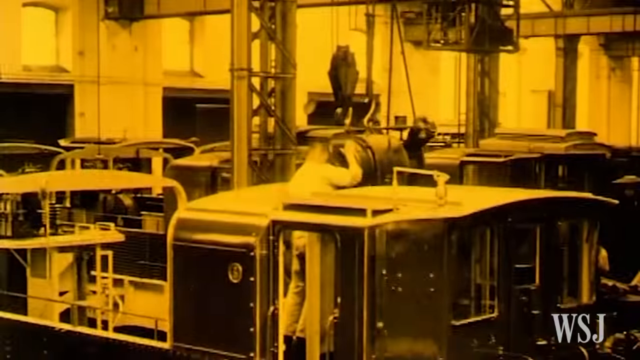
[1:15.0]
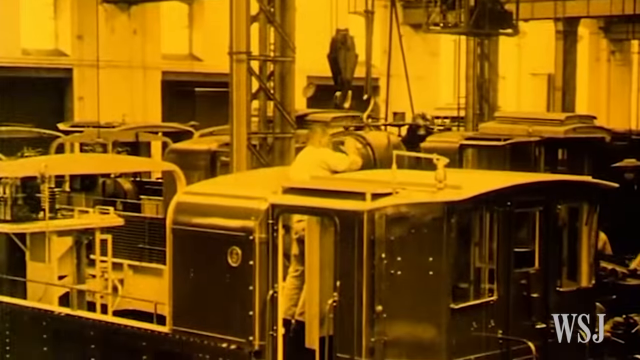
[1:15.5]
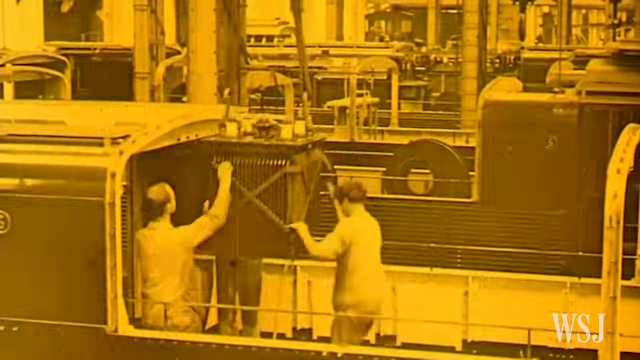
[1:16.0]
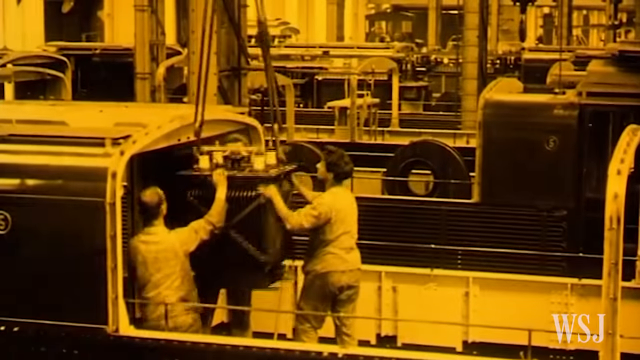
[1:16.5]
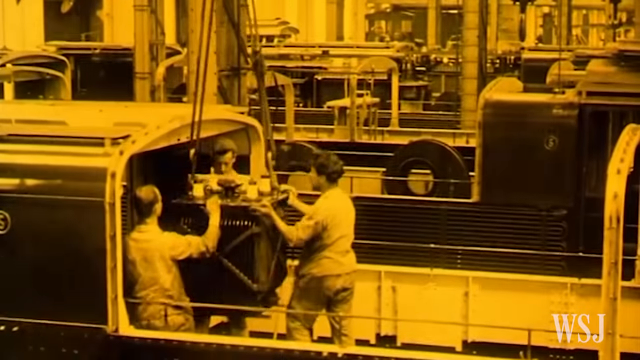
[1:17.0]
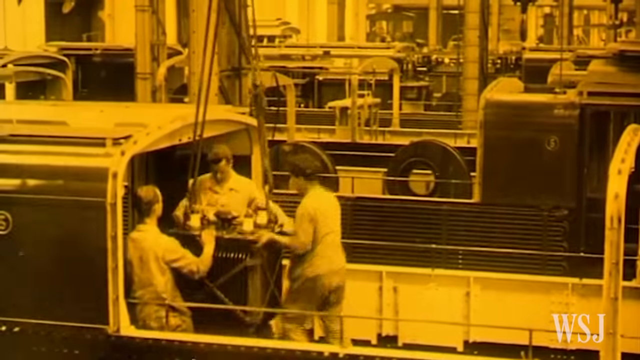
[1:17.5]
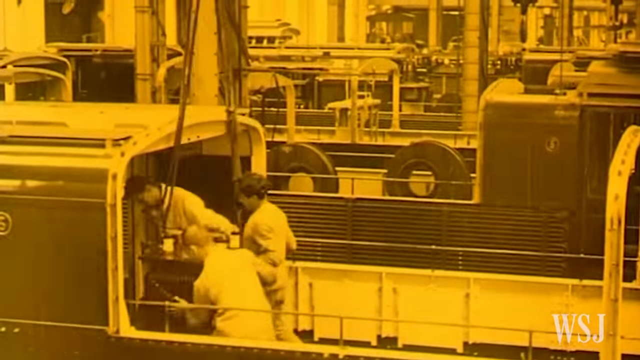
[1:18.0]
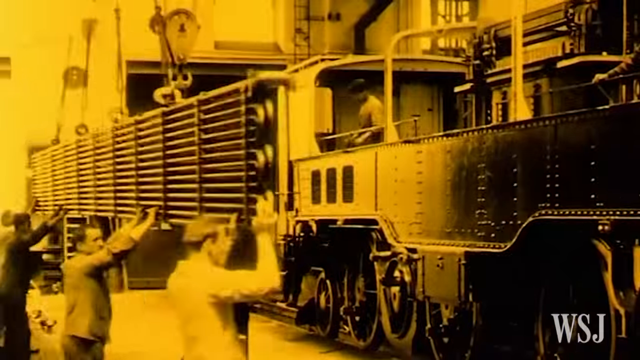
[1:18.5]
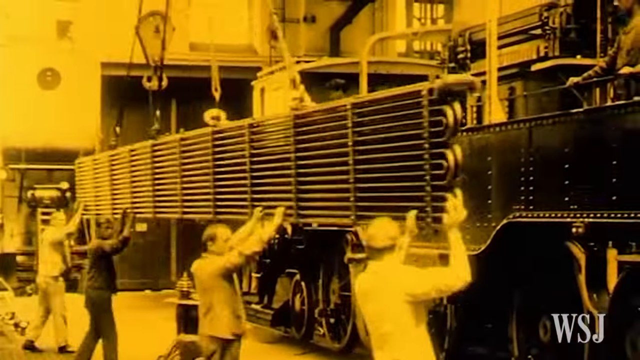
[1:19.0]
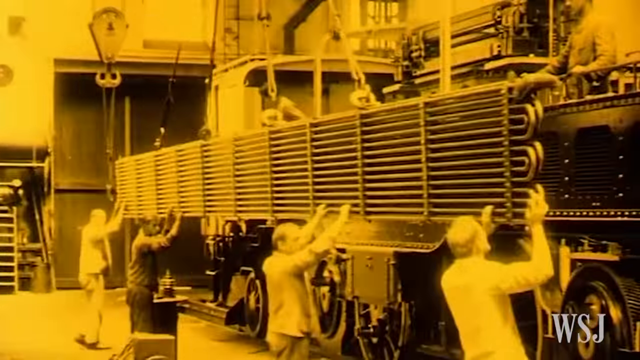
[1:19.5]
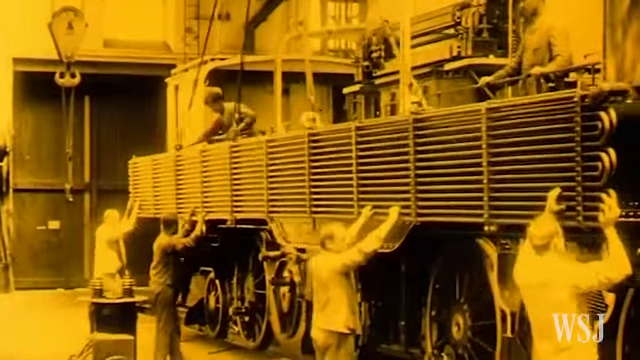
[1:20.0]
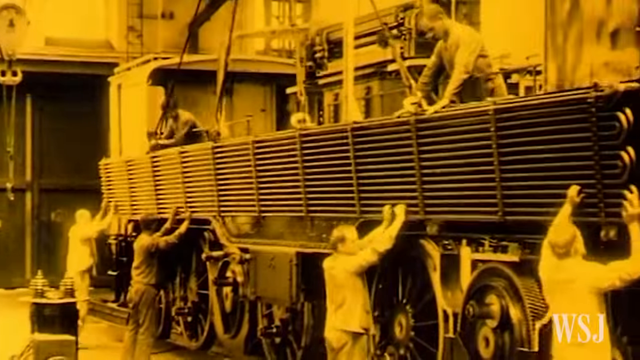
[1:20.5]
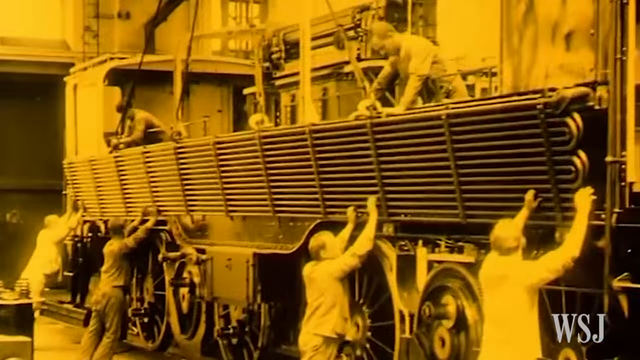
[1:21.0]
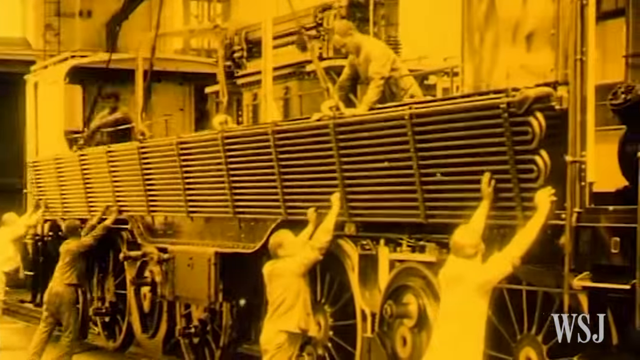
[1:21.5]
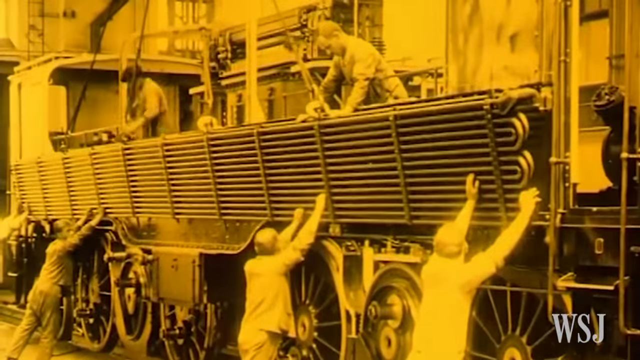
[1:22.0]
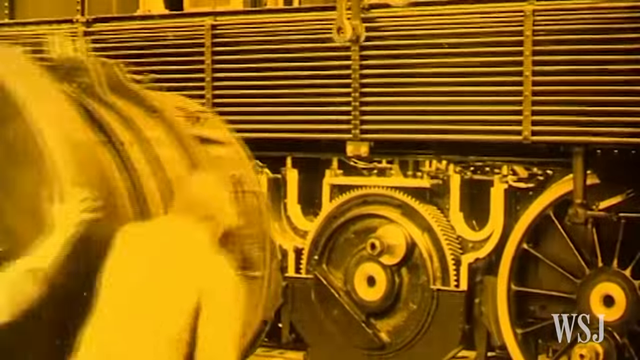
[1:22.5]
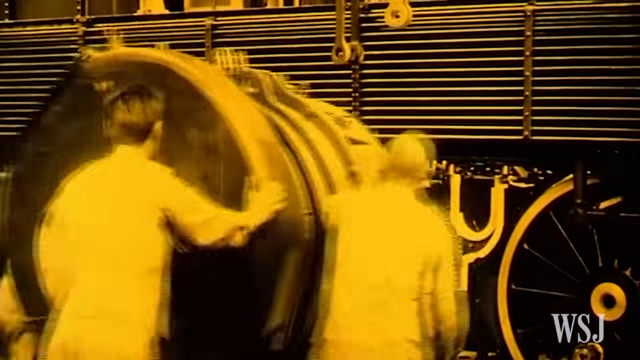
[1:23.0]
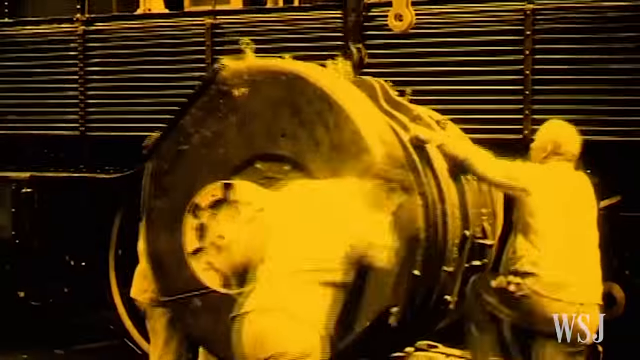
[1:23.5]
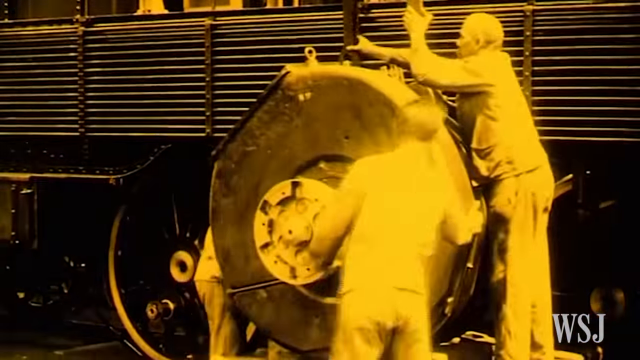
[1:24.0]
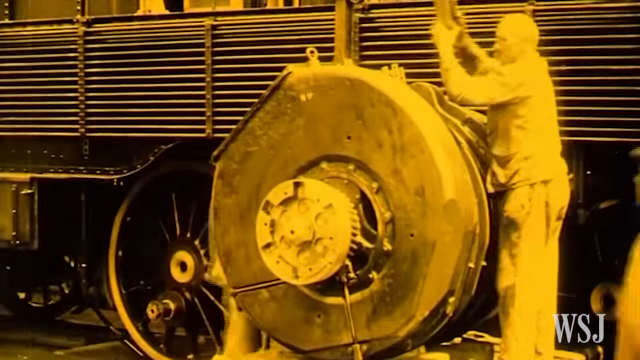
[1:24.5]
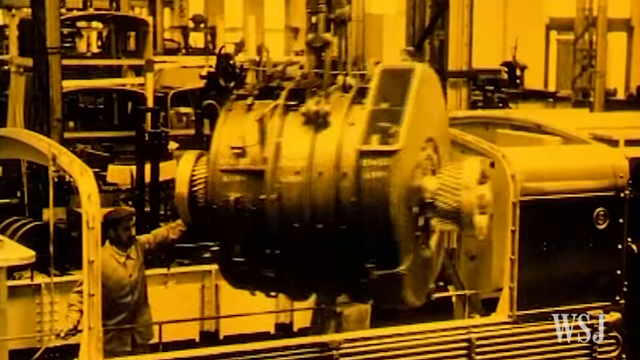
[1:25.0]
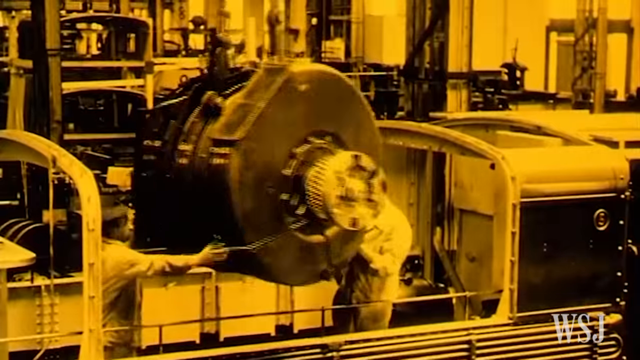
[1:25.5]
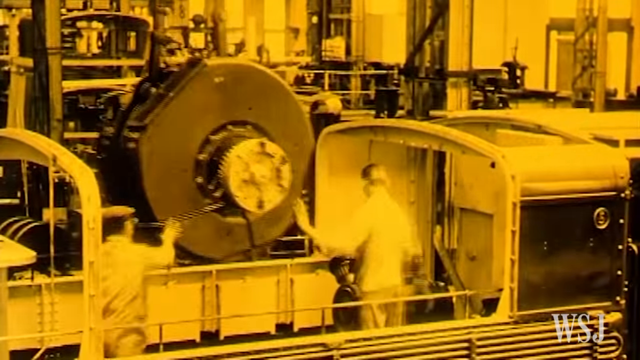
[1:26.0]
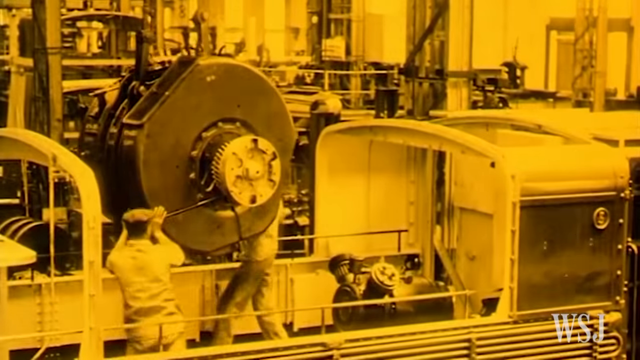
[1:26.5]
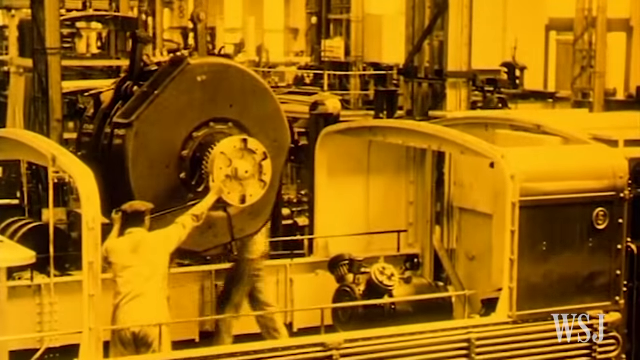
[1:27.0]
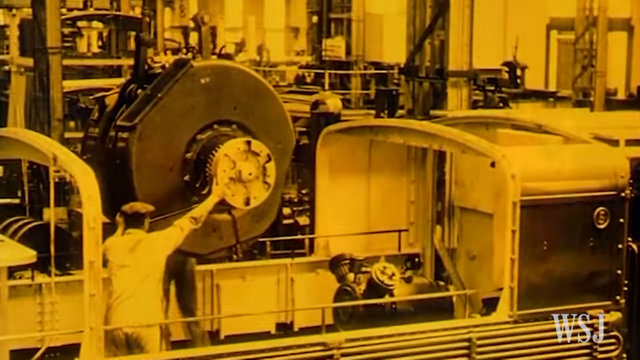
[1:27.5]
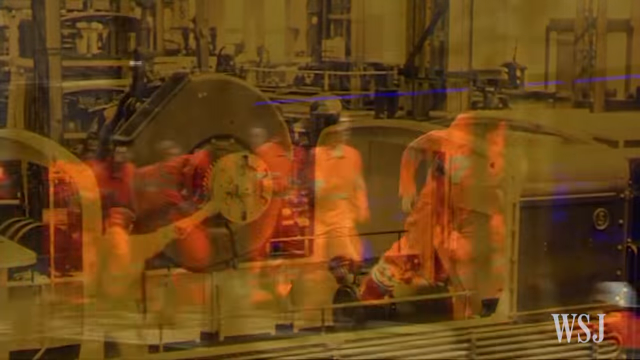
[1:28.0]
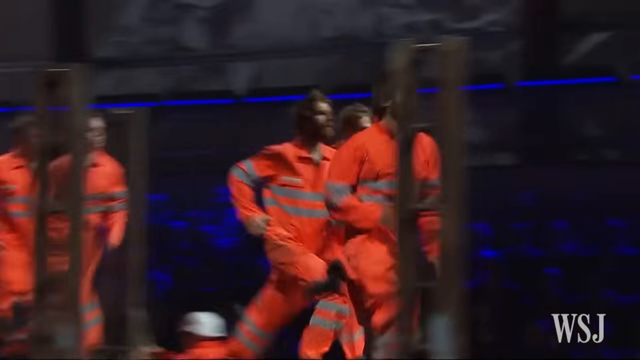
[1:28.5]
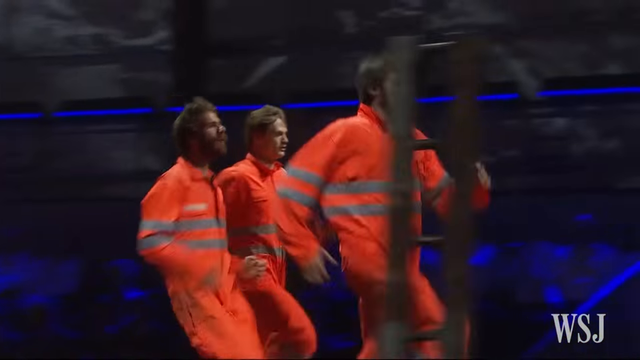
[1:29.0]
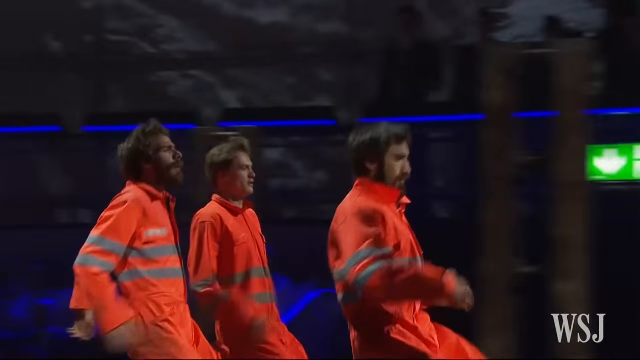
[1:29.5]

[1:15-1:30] Old footage shows people in a factory of some sort putting different materials together on a train. The footage moves fast and choppily and has a yellow tint over what is otherwise black and white. The men wear no hard hats but a similar kind of uniform; the colour cannot be made out, but it looks like long-sleeve shirts and long pants. Some wear hats and some do not. They put materials on the train. At the end the video is back in color, and a group of men in orange suits with silver reflective stripes are running.